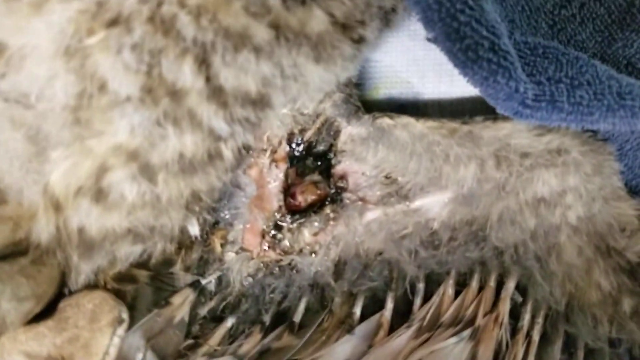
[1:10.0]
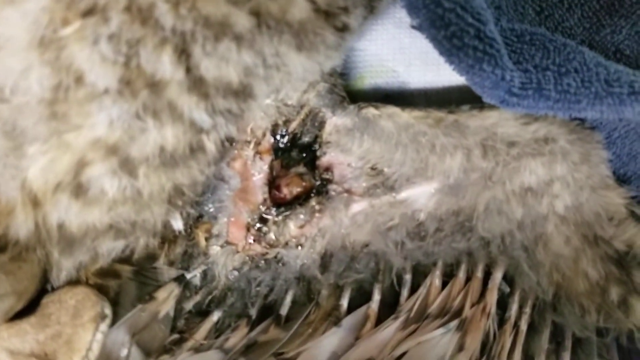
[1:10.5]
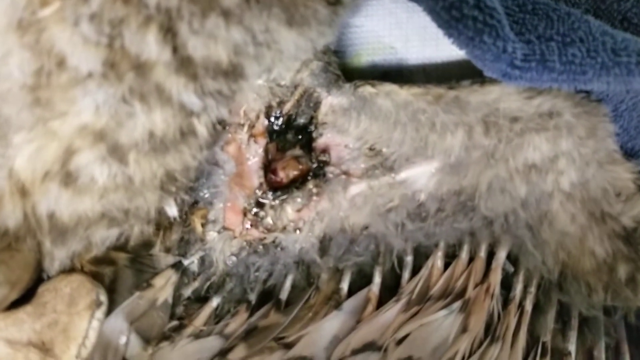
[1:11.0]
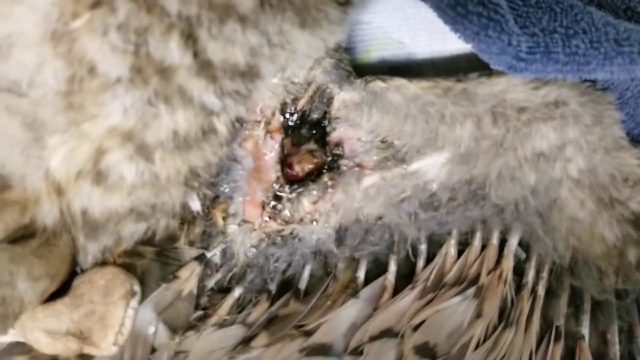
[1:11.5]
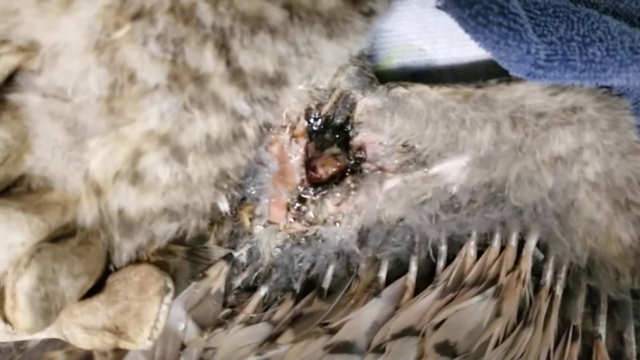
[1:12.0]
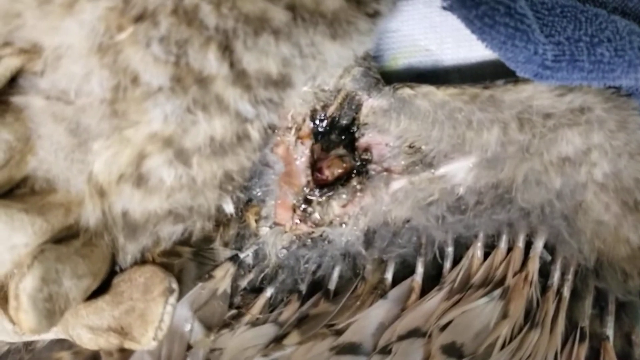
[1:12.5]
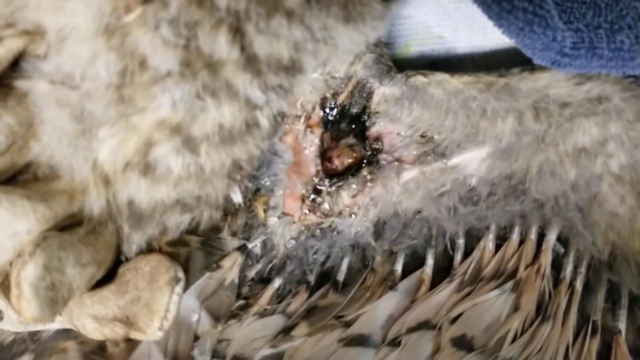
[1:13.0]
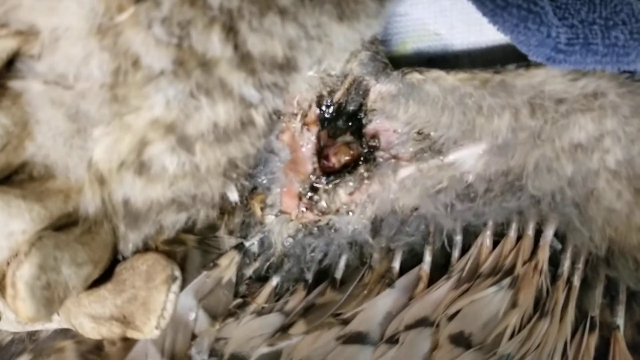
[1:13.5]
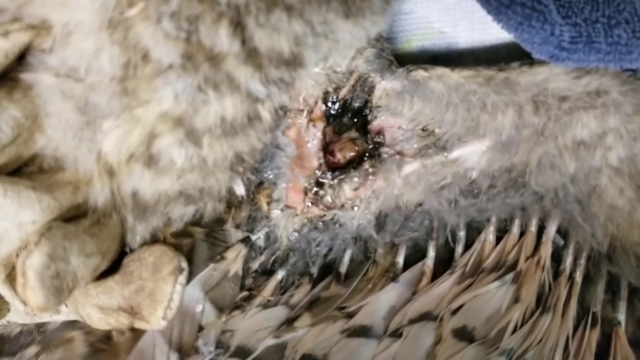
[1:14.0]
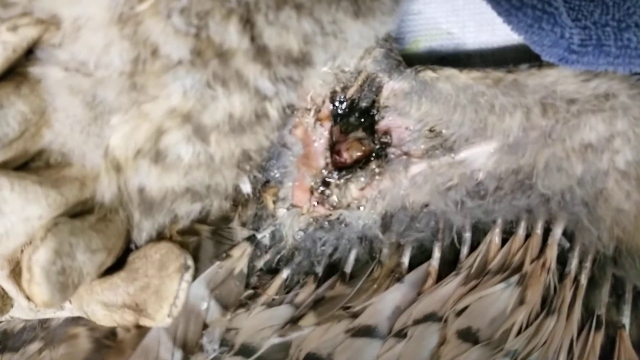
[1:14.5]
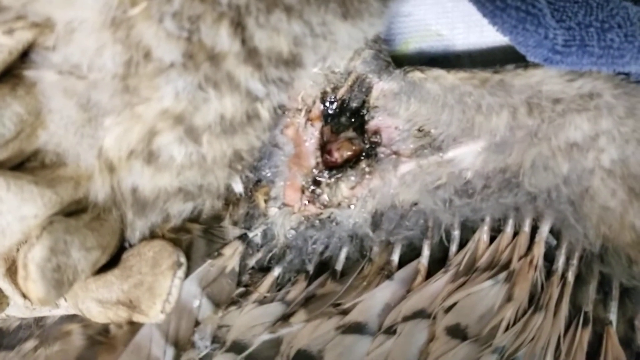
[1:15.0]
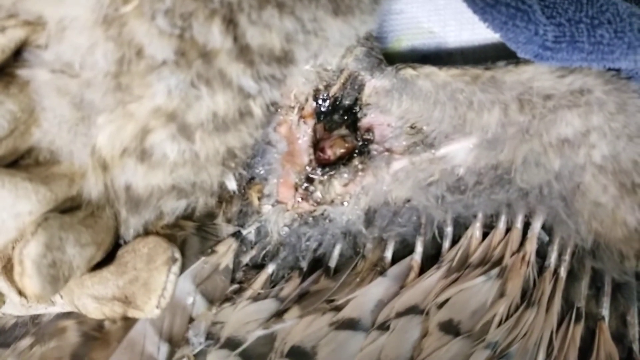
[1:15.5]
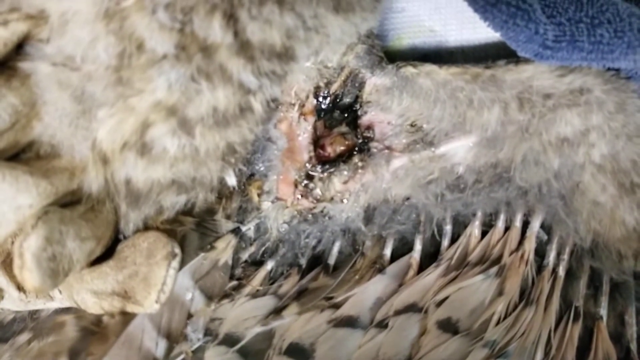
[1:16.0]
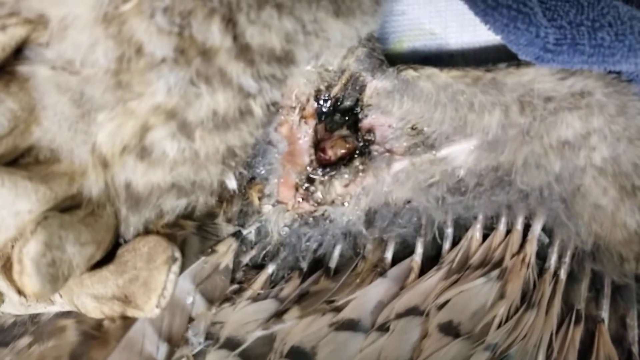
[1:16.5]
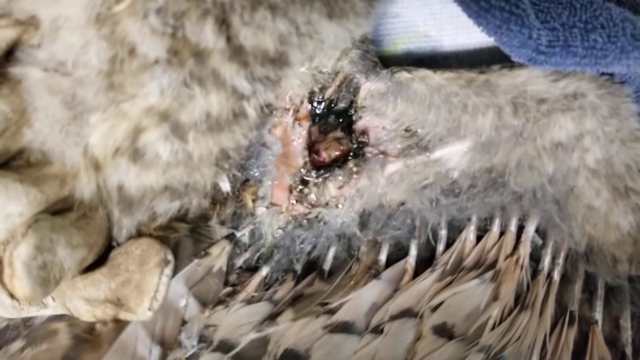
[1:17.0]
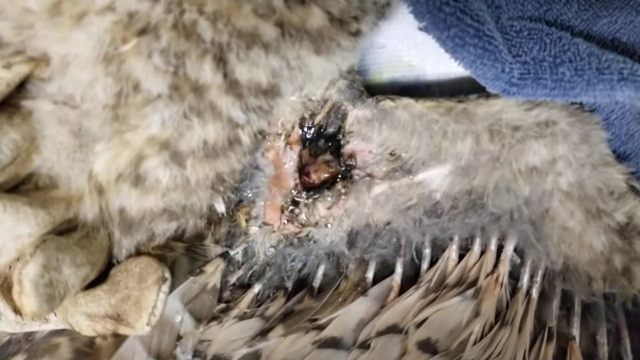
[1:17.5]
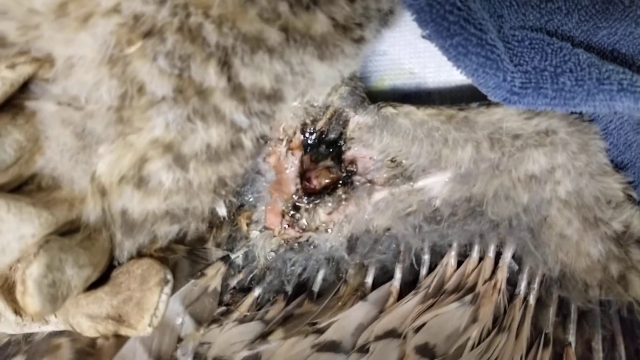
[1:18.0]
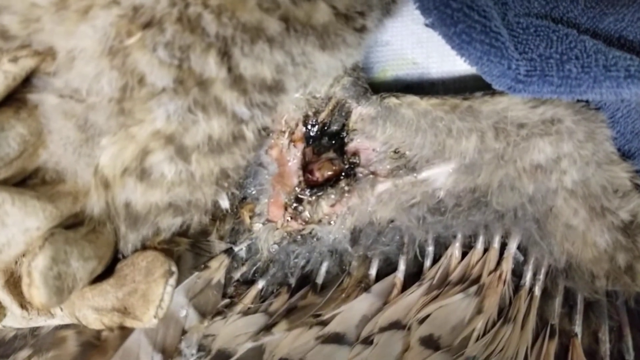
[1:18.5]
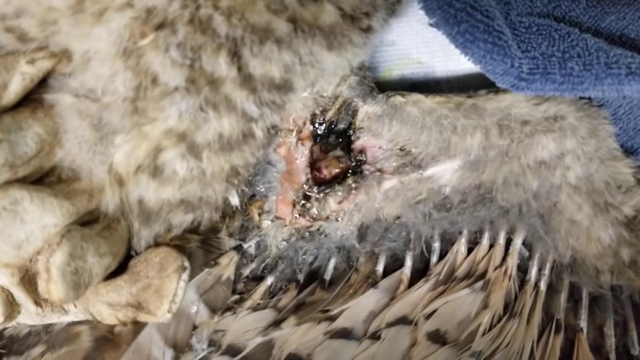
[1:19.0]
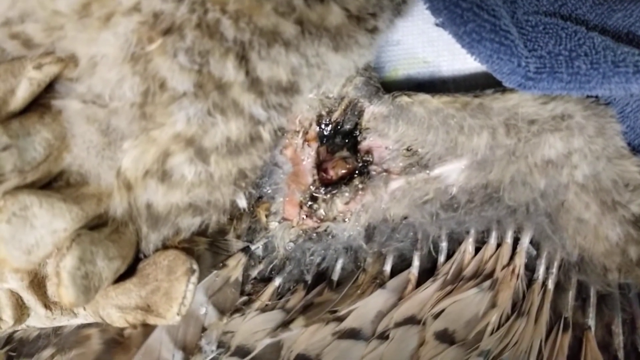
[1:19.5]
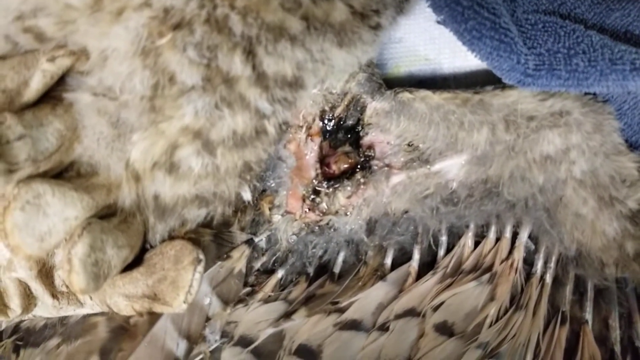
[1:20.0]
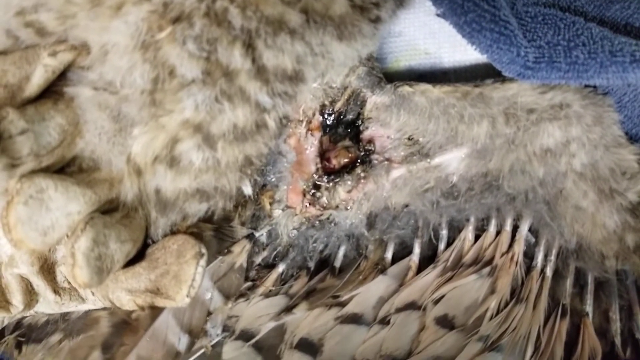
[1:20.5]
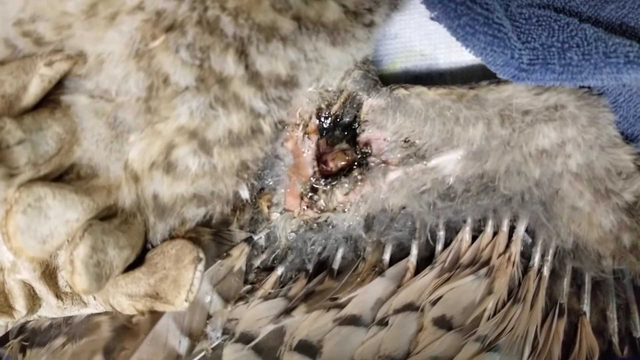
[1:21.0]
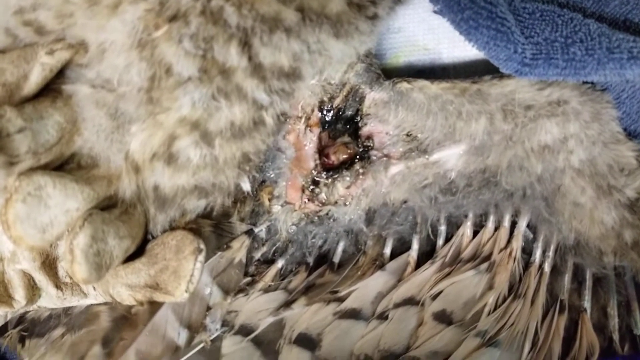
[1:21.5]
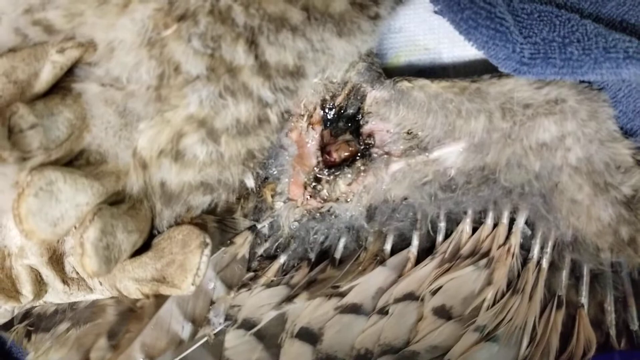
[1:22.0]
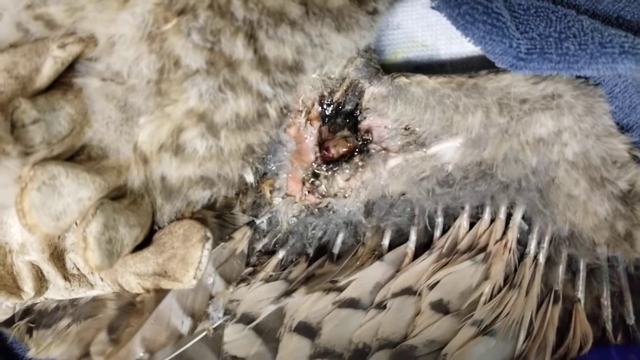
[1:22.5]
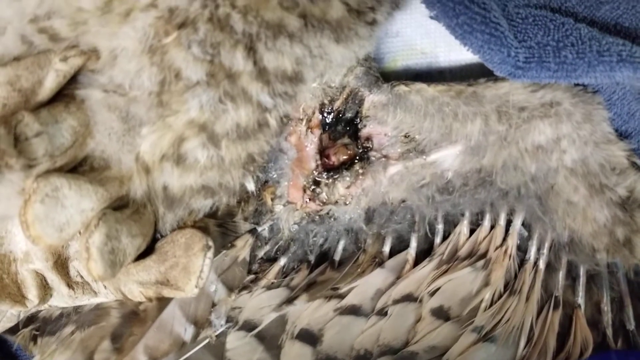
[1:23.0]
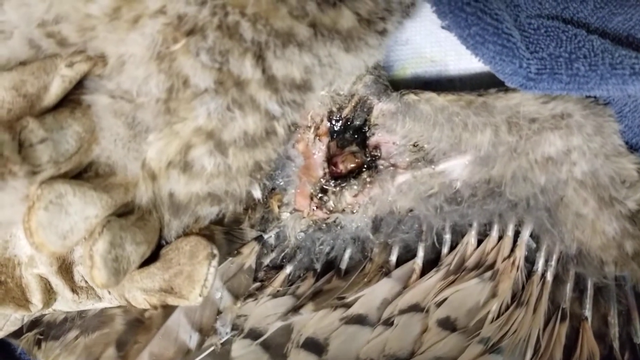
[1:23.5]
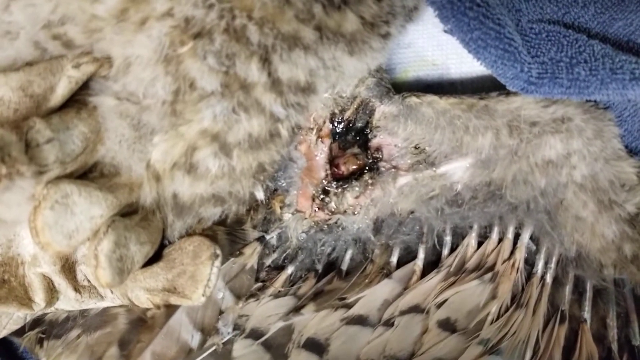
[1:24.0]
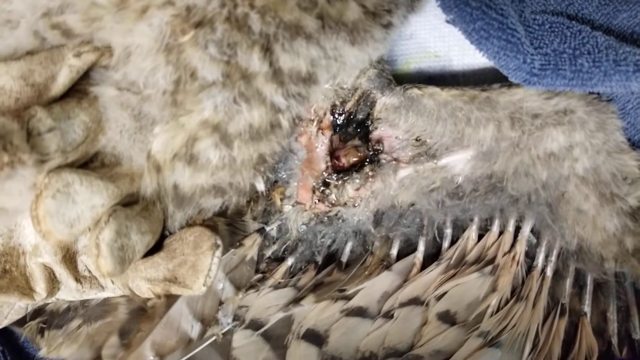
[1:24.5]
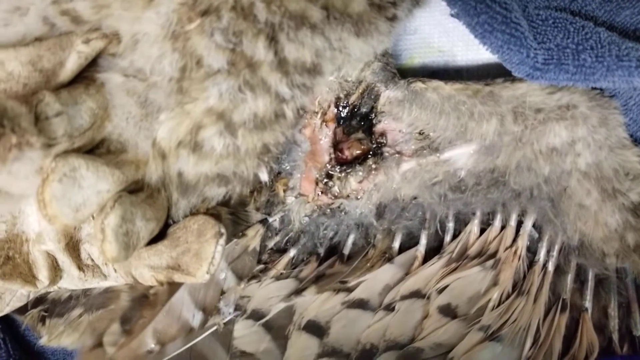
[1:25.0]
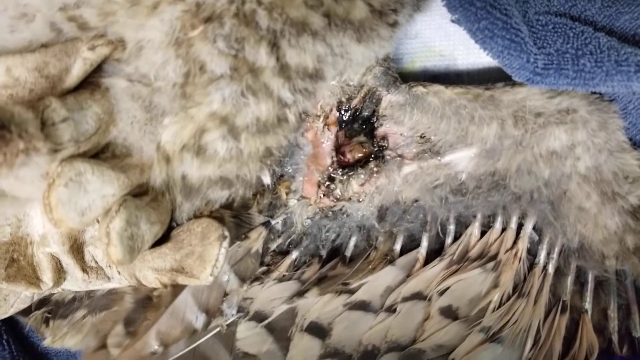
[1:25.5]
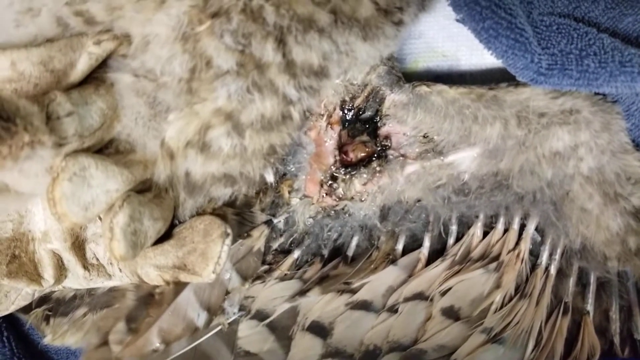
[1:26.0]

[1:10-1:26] The wound is shown with the white kind of dust sprinkled on it, in a view between the close-up and the zoomed-out view, focusing on the same area. The white dust is possibly some kind of medicine. The outline of the wound appears more blackened than before. Right at the end, something appears to move on the upper part of the wound, so perhaps there is something in the wound.